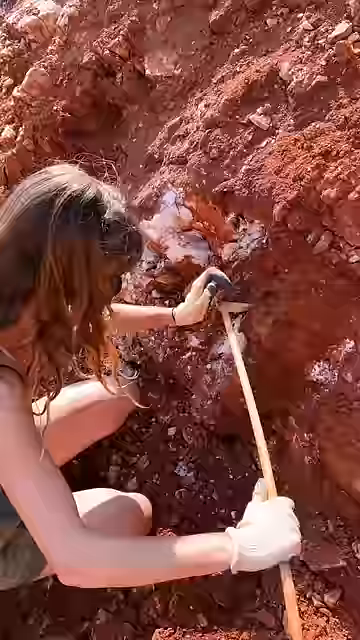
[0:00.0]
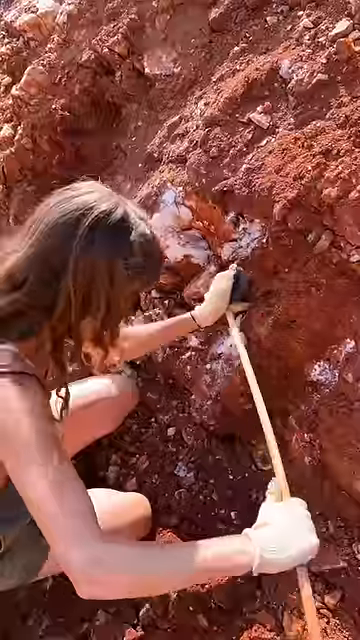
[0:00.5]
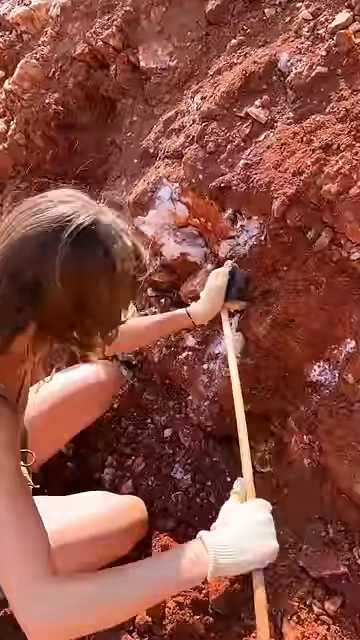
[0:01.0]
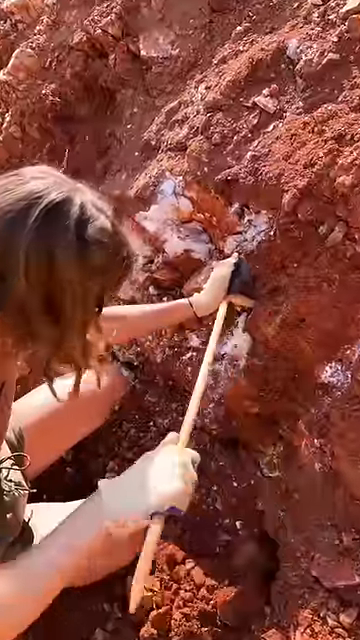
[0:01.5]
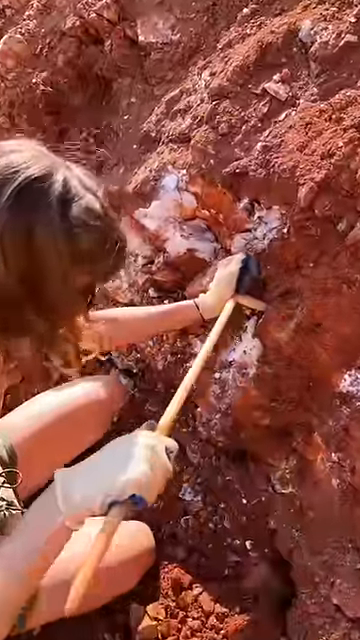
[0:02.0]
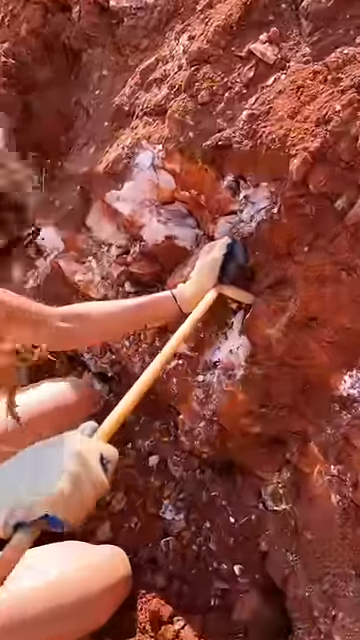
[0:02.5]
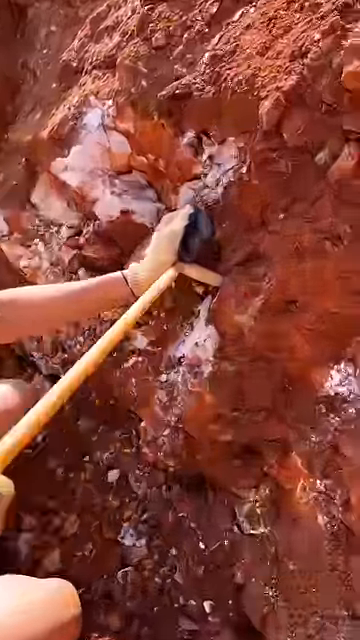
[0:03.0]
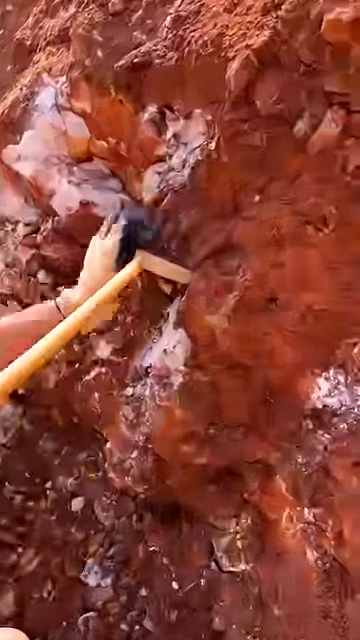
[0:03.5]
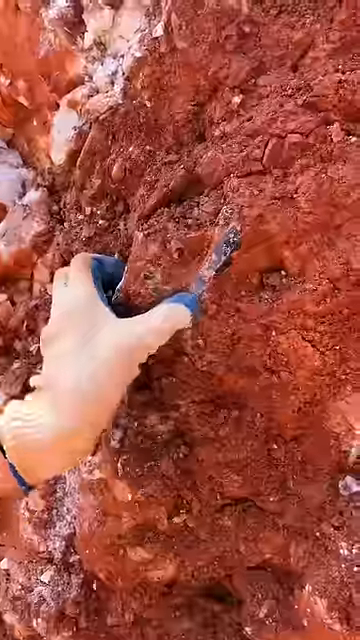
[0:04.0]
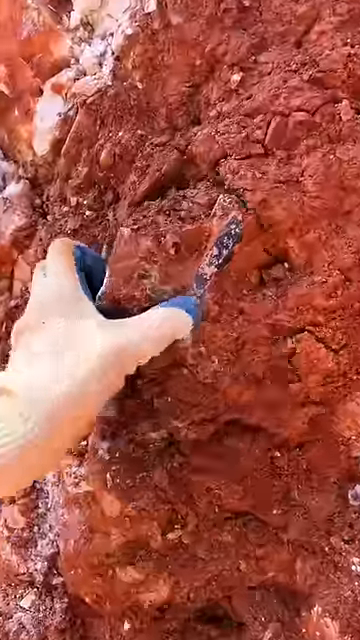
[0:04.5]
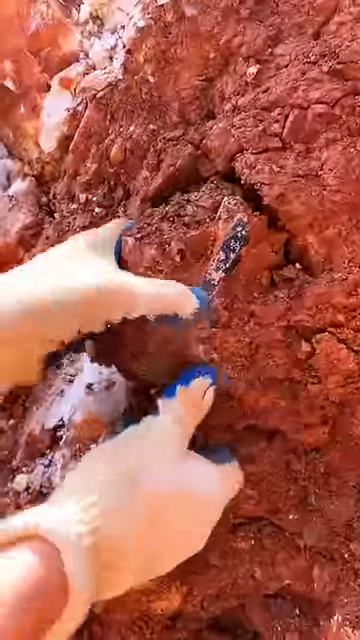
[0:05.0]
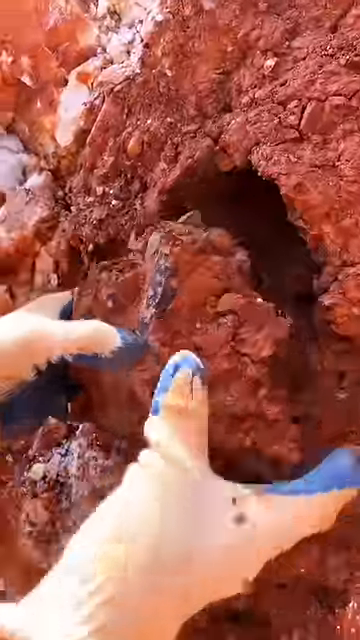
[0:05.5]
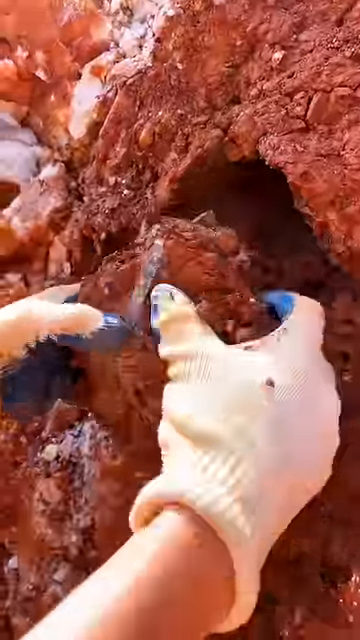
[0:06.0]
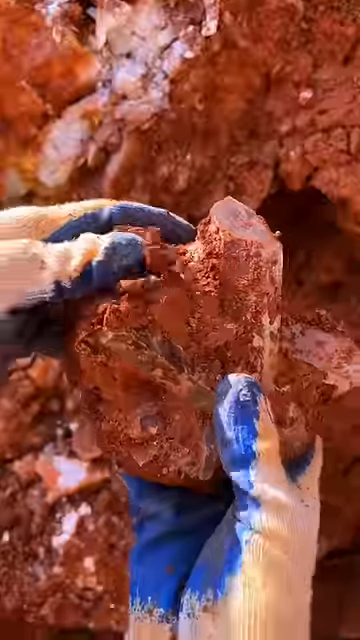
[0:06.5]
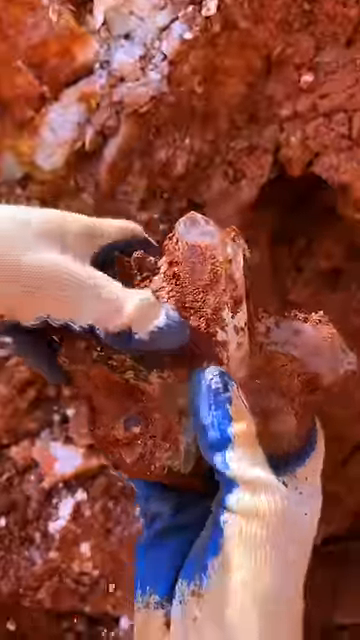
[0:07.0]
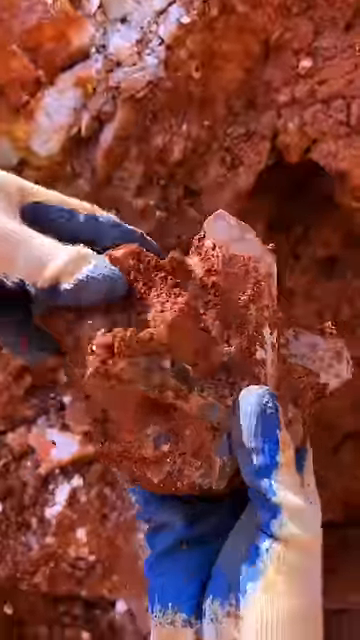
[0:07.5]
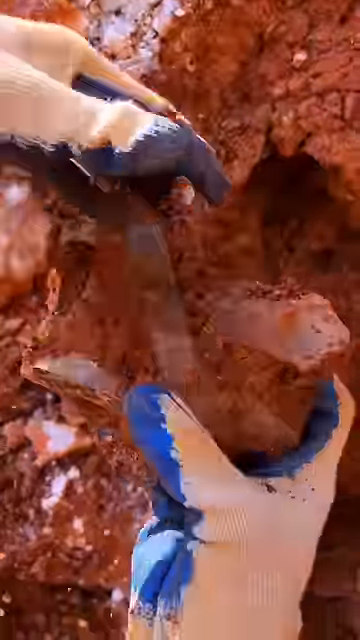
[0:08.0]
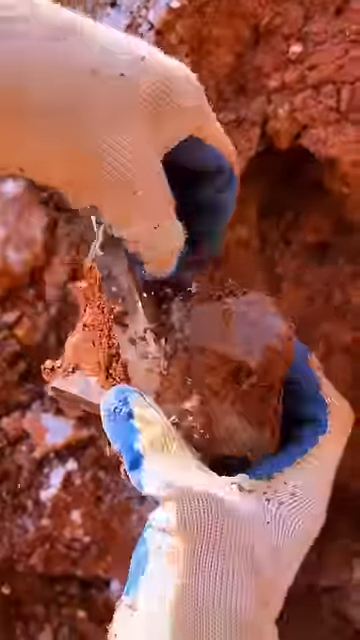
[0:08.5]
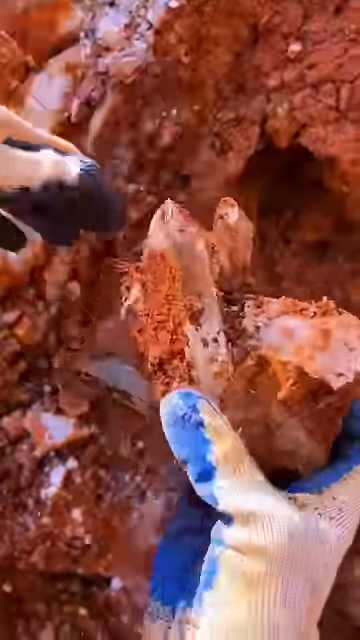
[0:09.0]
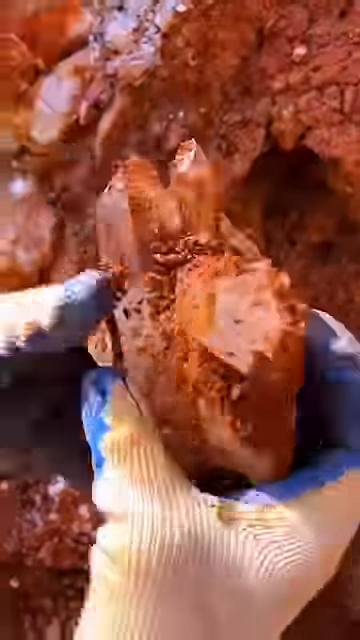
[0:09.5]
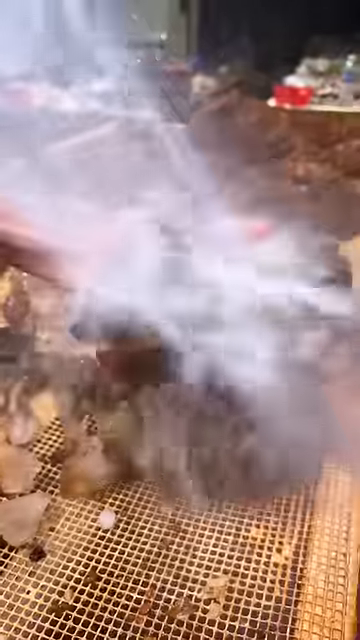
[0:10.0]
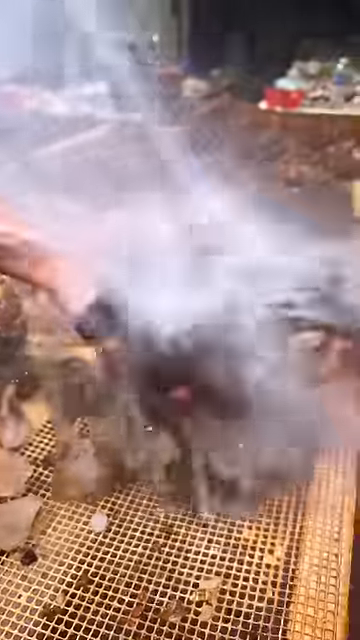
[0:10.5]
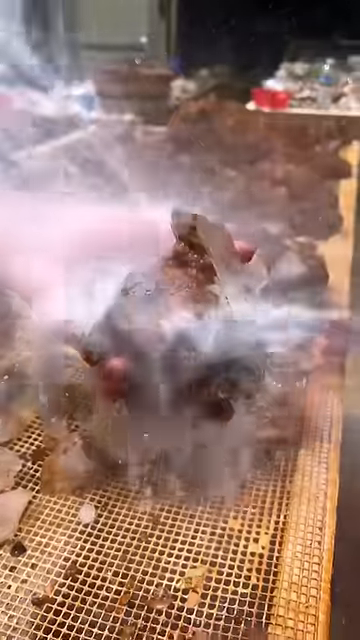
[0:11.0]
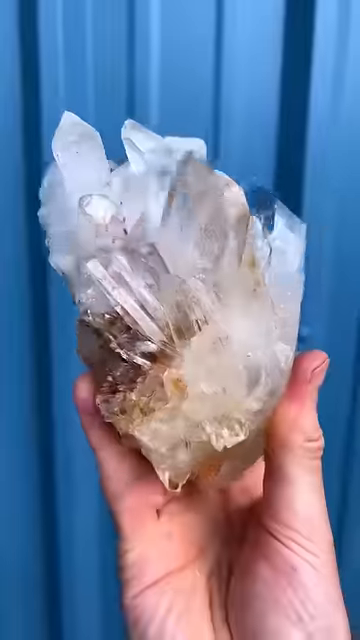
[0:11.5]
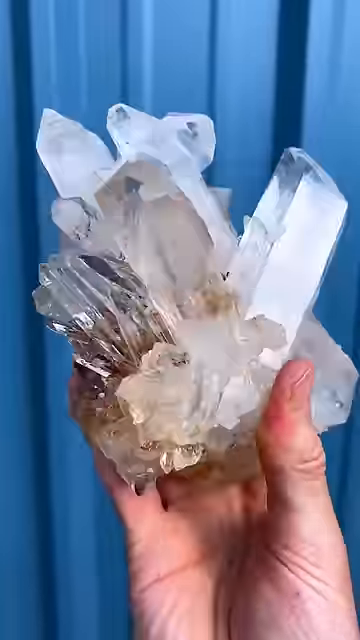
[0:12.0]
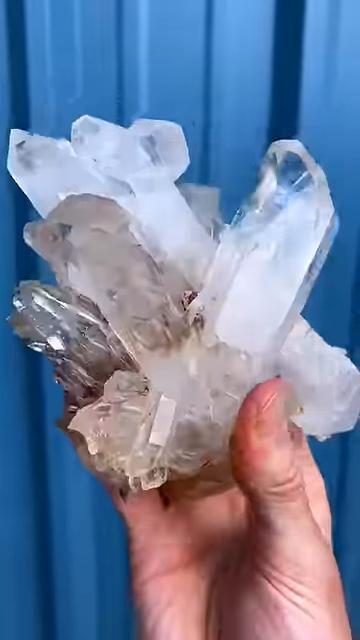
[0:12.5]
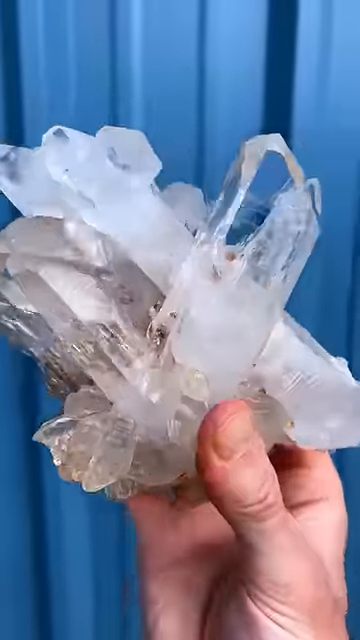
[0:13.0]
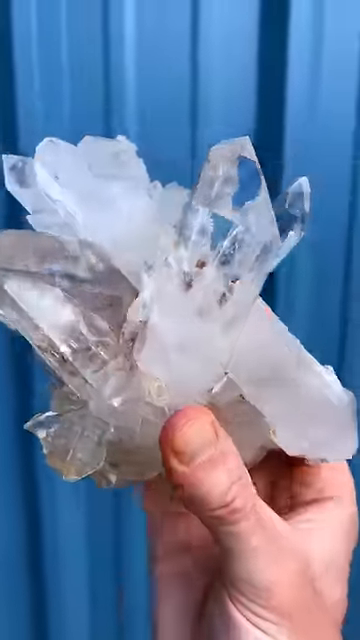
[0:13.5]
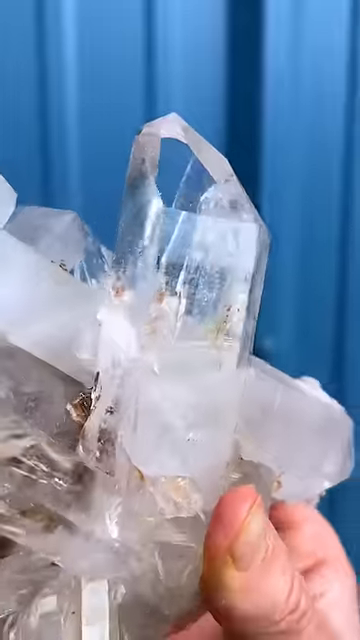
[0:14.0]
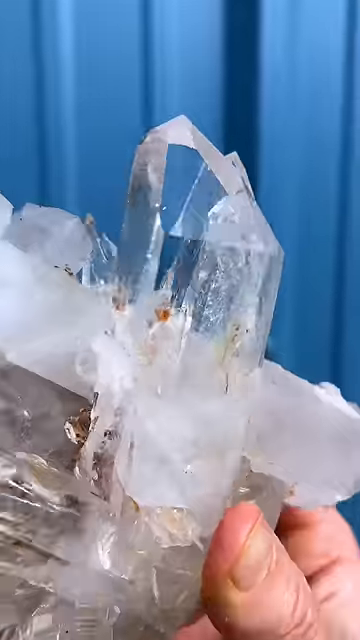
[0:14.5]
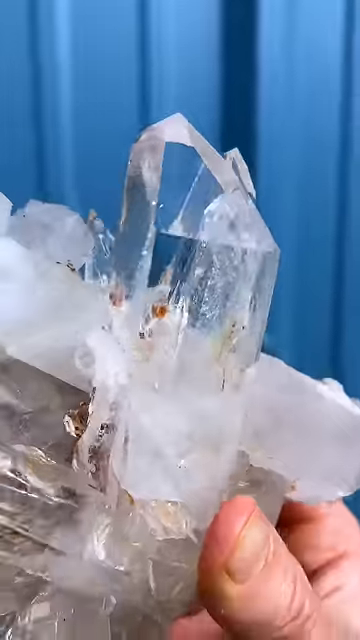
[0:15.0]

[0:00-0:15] A woman with short brown hair has what looks to be a stick embedded in a large chunk of brown, rocky dirt, and she moves the stick around inside the dirt as if trying to get access to something. Her hands are visible; she wears a pair of whitish-blue gloves. She grasps a piece of the brown chunk of dirt, begins to pull it out, and then starts moving some of the dirt off of it, revealing an object that looks somewhat like a white crystal. A very large, high-pressure blast of water goes over the crystal, which is still slightly dirty after she cleans it. She then shows the crystal with a blue curtain behind her. For the most part the crystal has a white, clear appearance, with specks of brown throughout. It has a very nice sheen and glistens as she moves it.